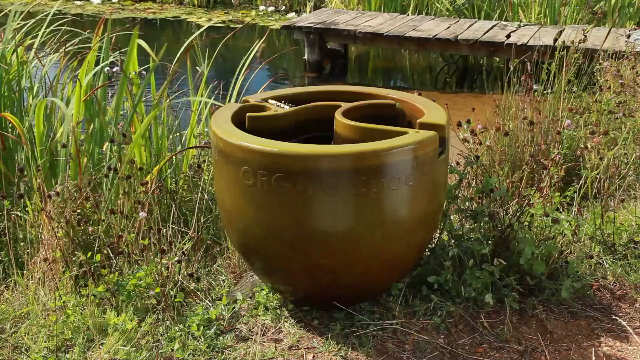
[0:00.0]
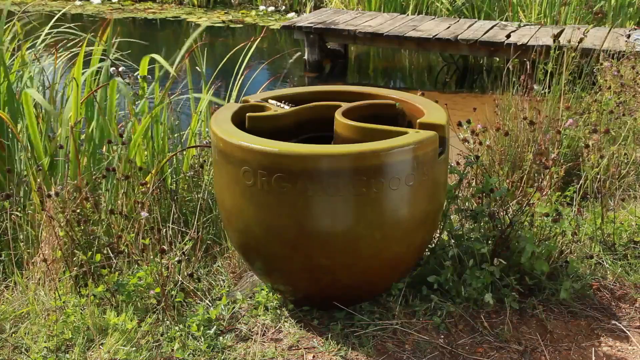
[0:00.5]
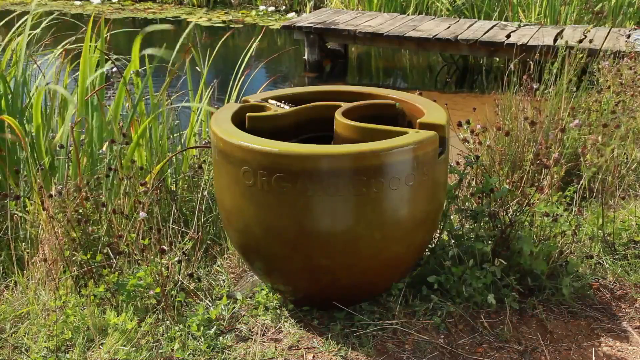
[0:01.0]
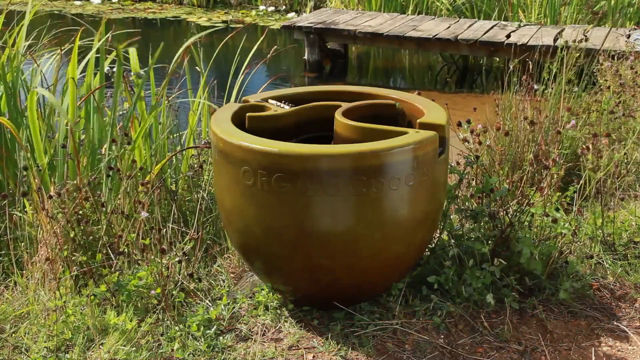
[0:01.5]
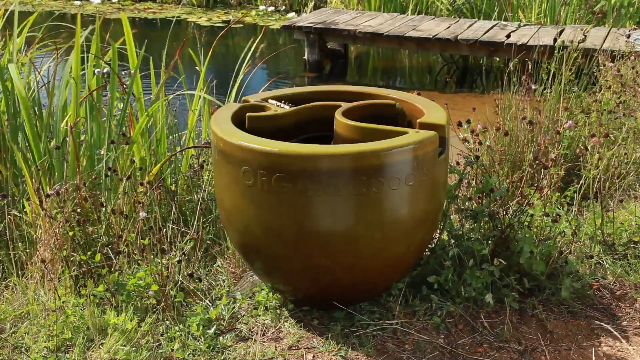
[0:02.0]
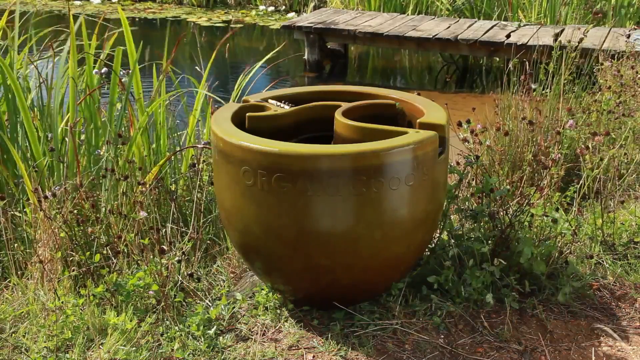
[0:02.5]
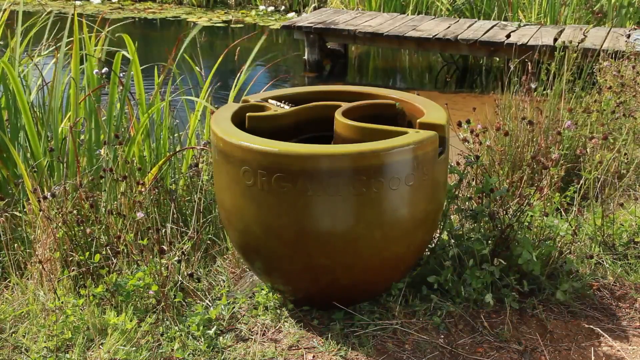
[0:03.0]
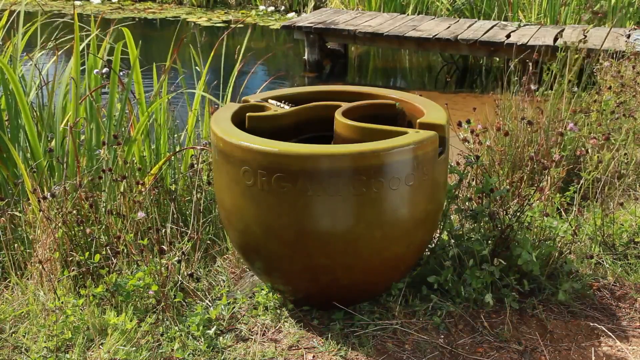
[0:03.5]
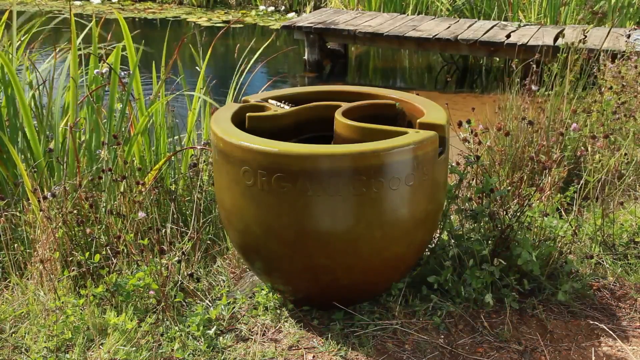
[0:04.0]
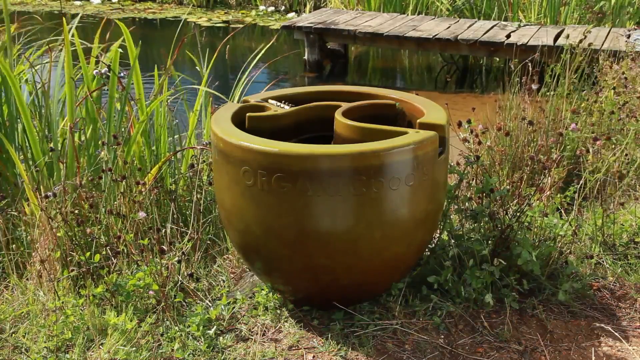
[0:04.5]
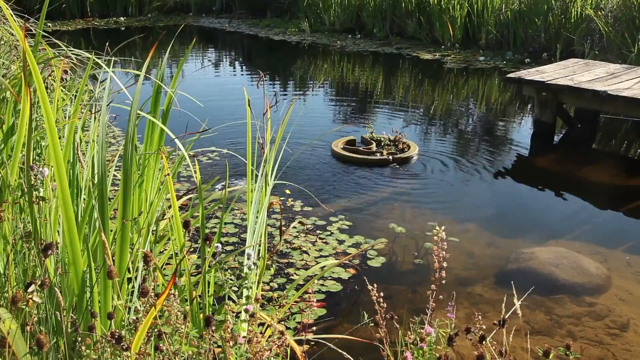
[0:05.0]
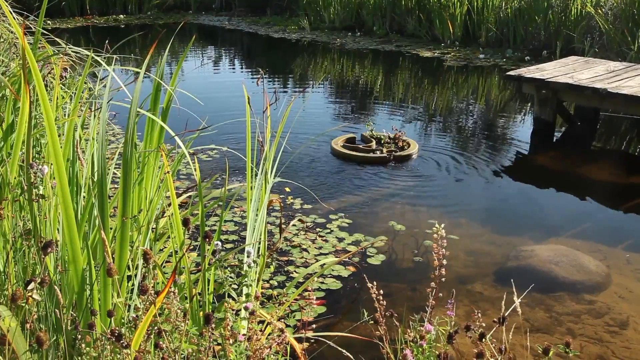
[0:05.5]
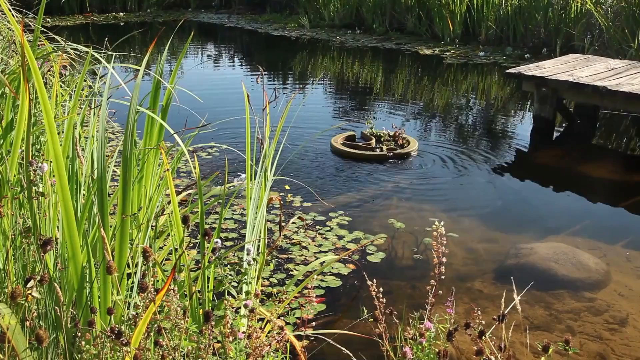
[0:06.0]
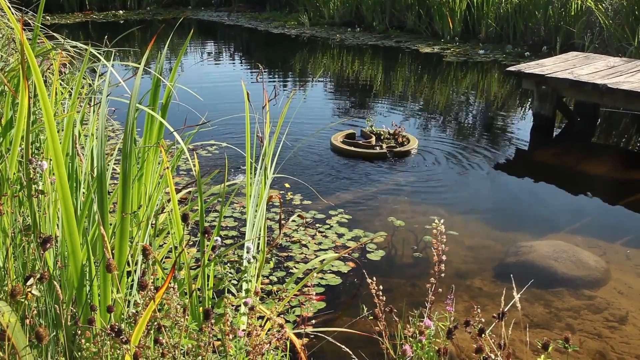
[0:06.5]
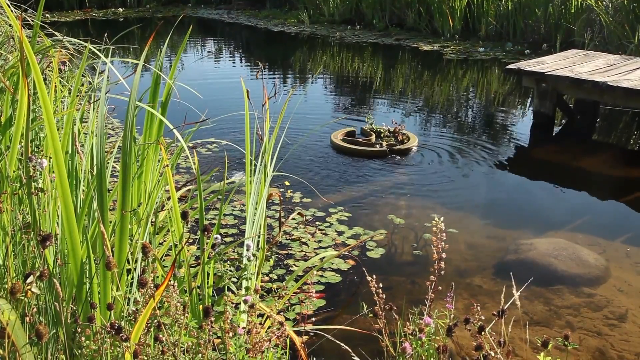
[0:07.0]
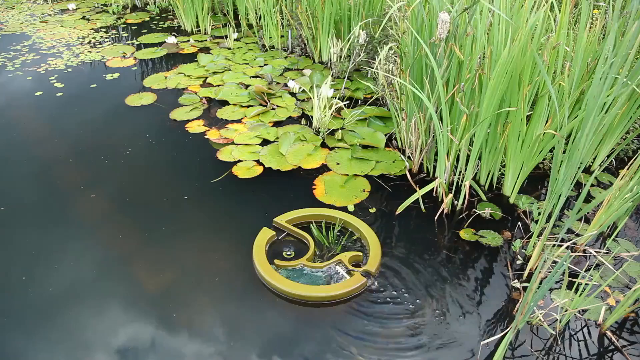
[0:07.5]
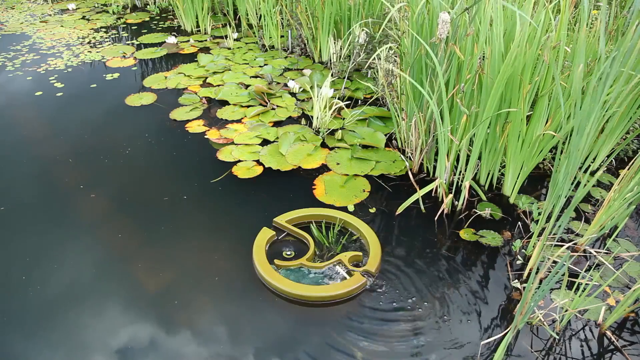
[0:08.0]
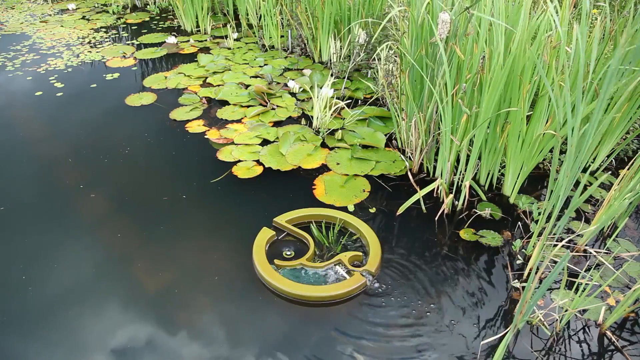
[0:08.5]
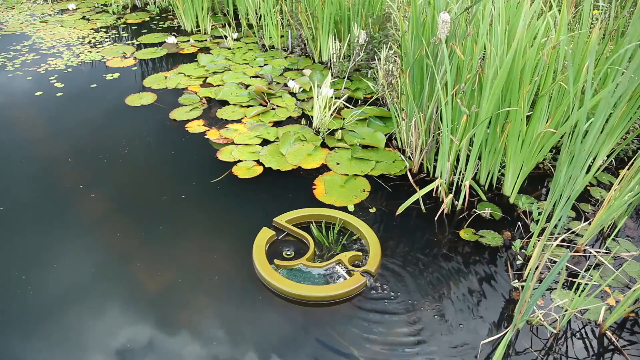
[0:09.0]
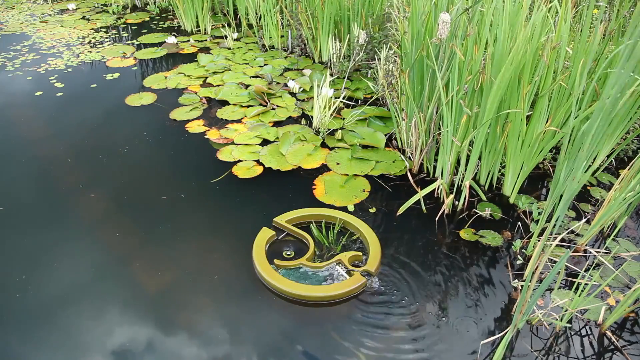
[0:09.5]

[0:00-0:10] The video shows a place where the first thing visible is a yellow object. Behind it there is water, apparently a pool, and a walkway or path leads into the pool. There is some grass beside the object, and beside the object there is writing that reads "RG". Next the object is shown placed inside the water, with bubbles coming out on top of it. Inside the water there are grasses with a few flowers, as well as plants with circular leaves and some flowers. The water is clean, and a few objects can be seen at the bottom.